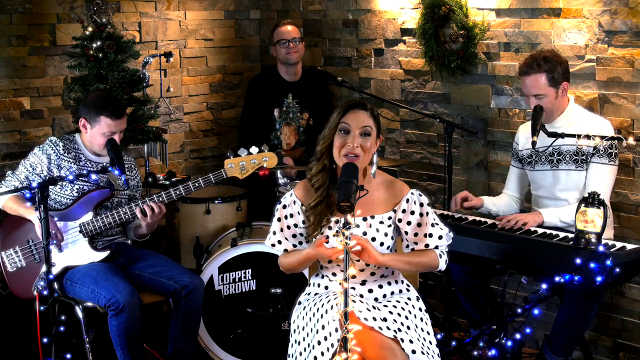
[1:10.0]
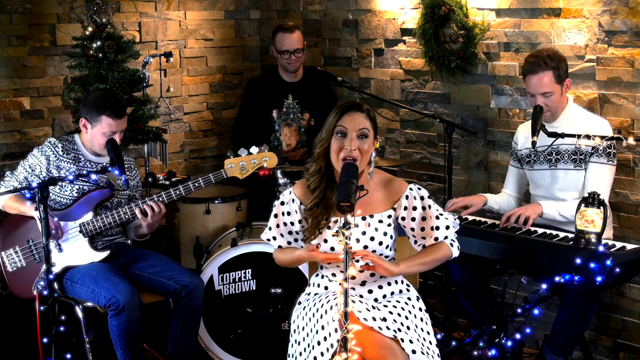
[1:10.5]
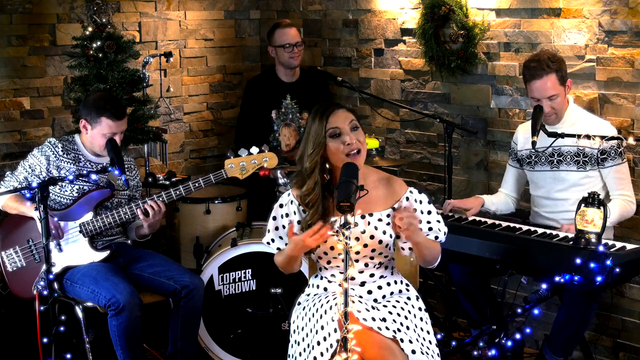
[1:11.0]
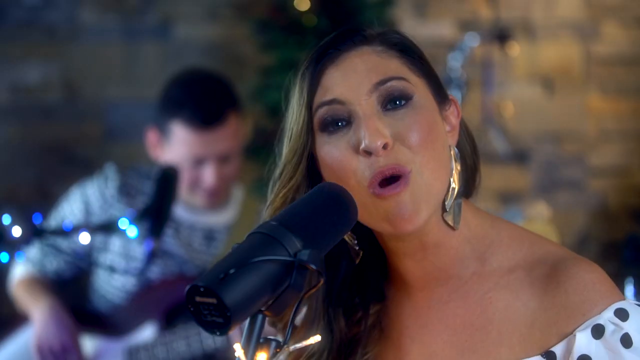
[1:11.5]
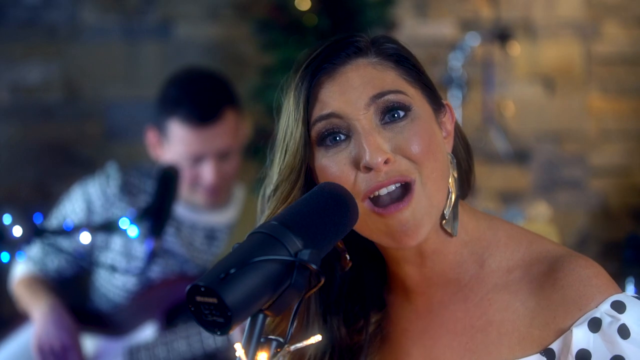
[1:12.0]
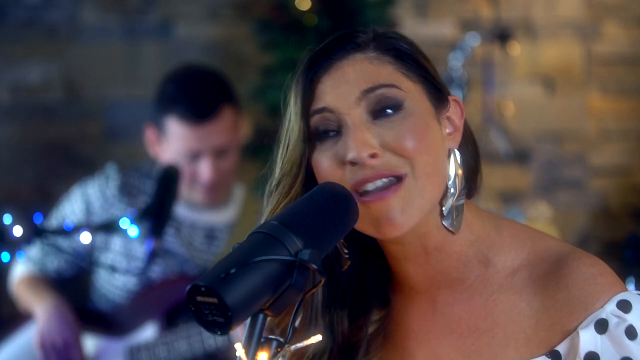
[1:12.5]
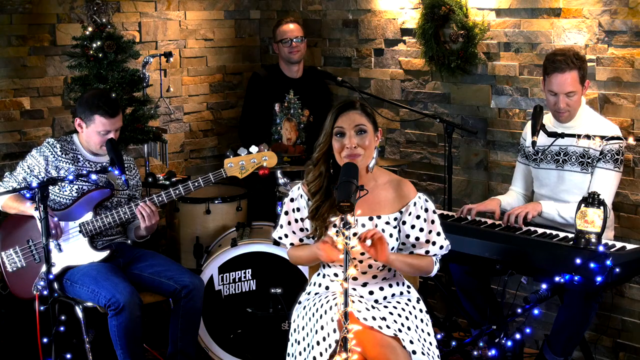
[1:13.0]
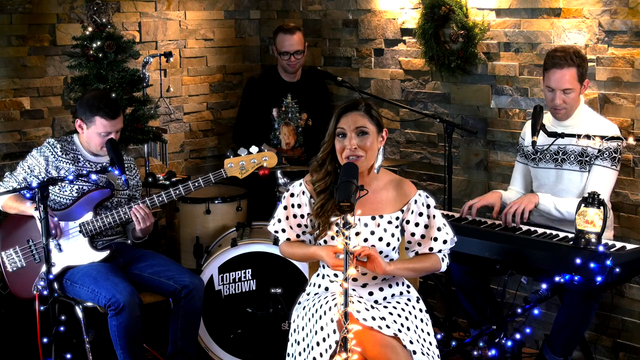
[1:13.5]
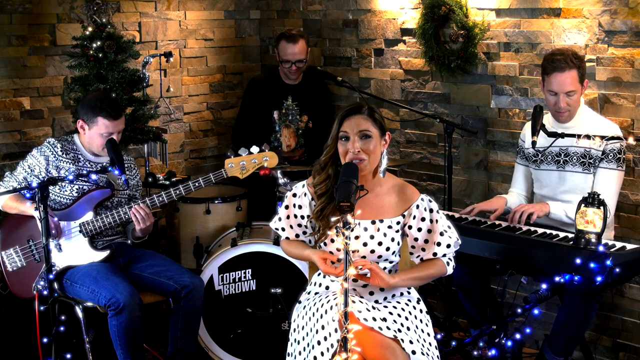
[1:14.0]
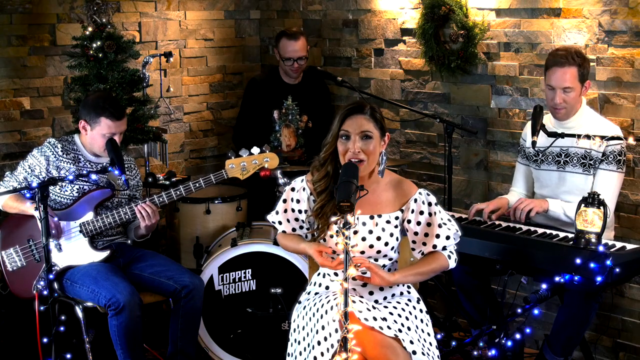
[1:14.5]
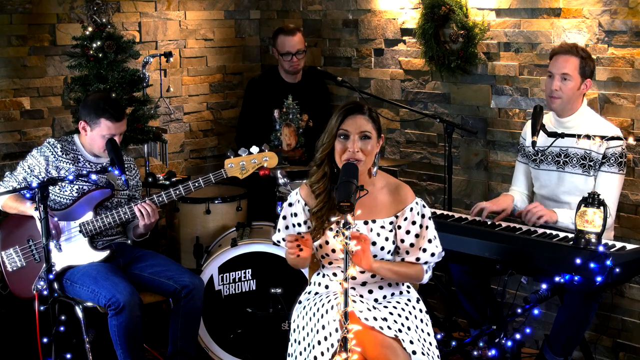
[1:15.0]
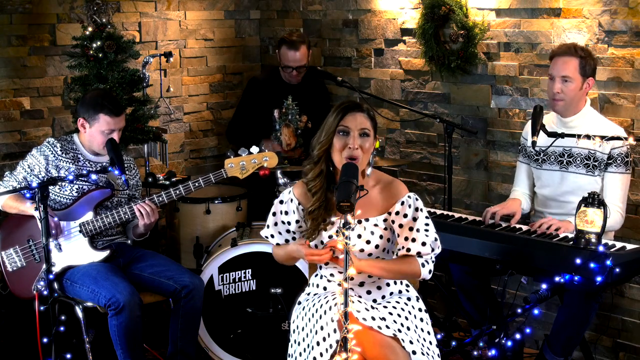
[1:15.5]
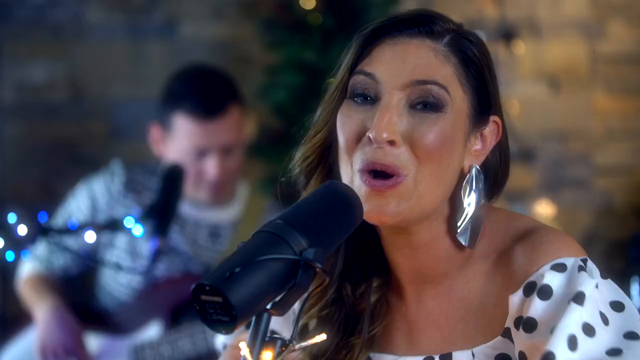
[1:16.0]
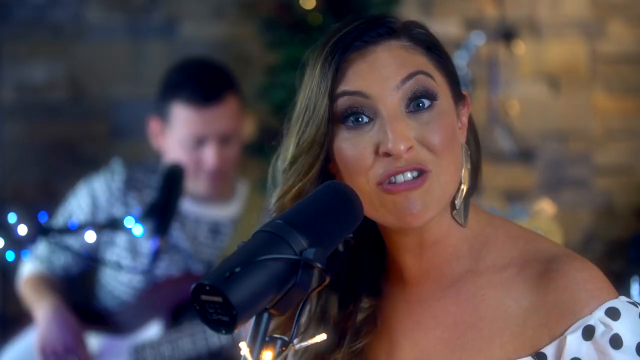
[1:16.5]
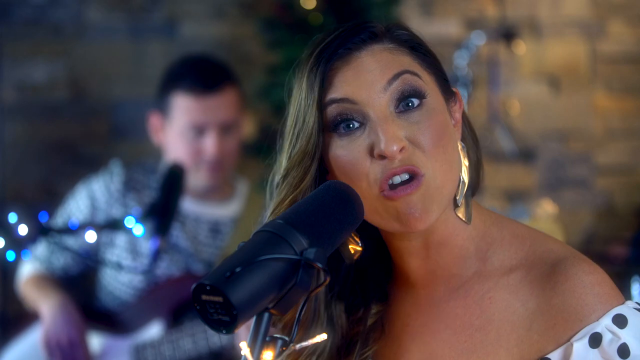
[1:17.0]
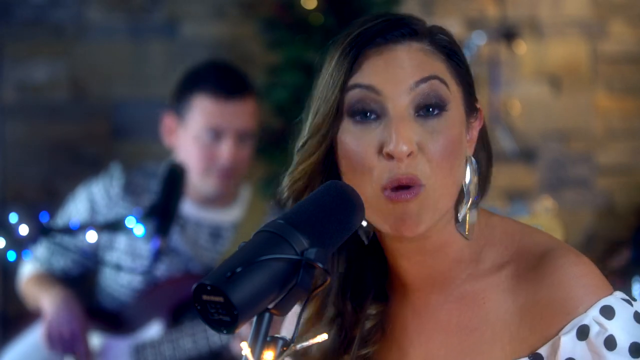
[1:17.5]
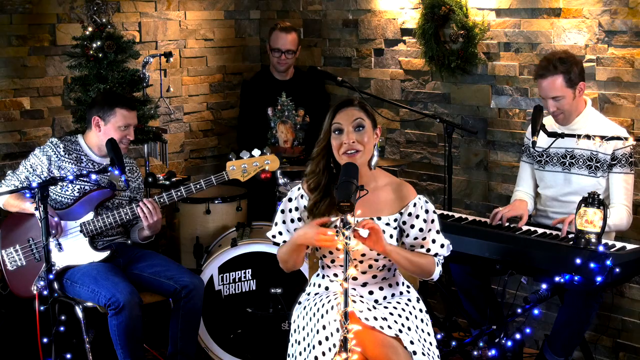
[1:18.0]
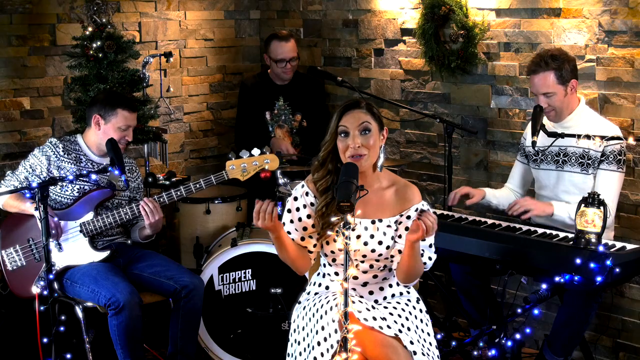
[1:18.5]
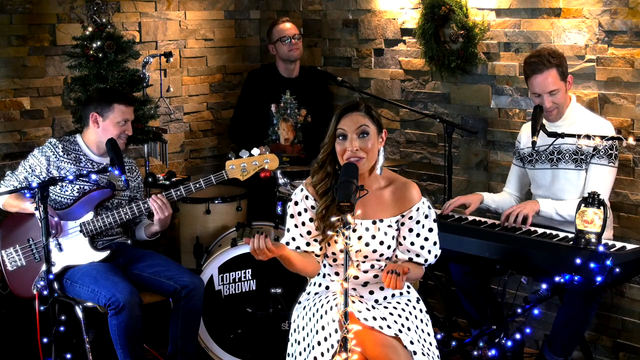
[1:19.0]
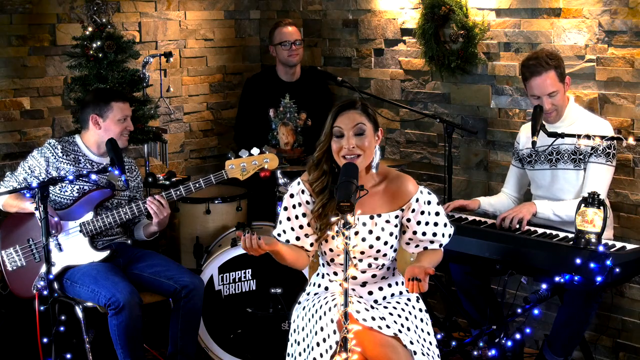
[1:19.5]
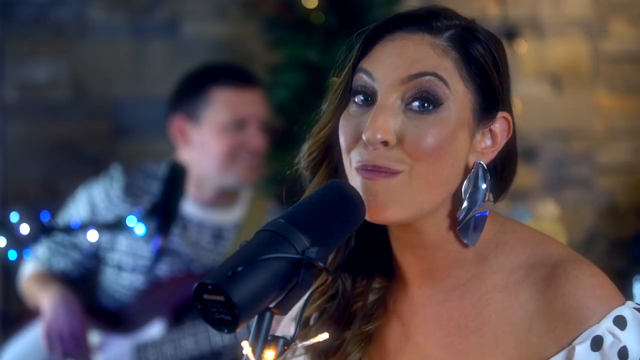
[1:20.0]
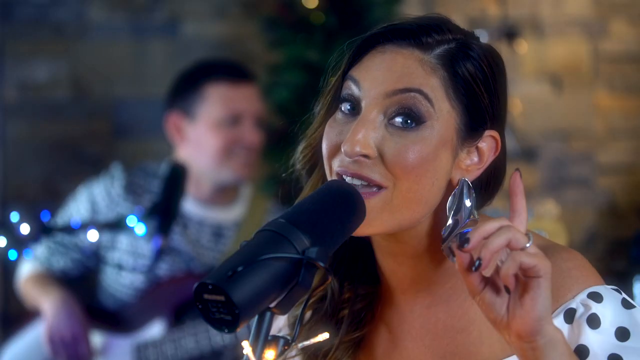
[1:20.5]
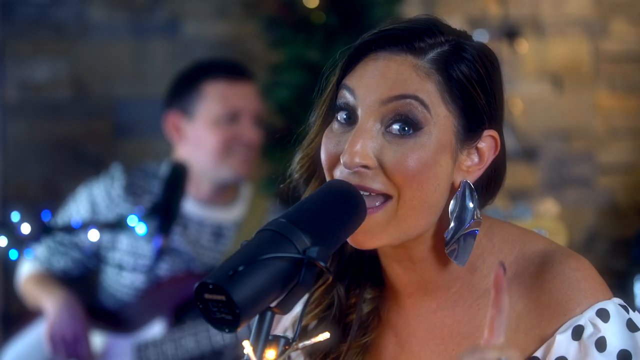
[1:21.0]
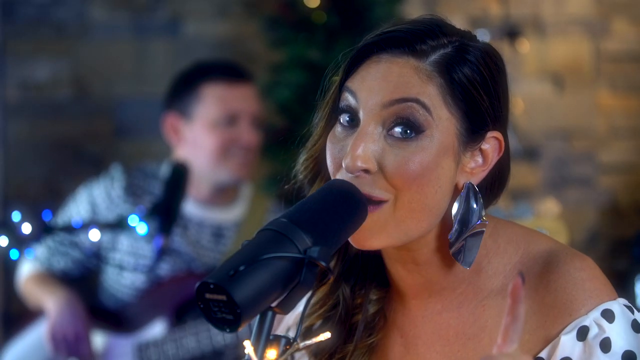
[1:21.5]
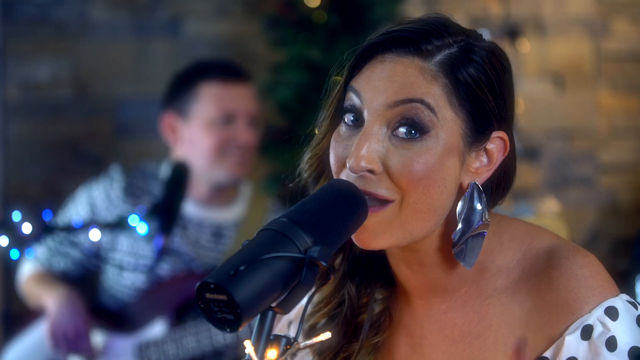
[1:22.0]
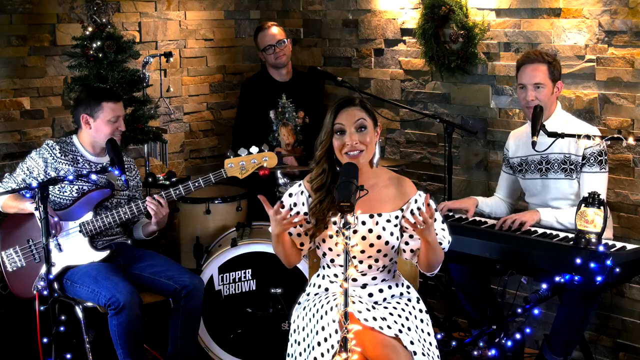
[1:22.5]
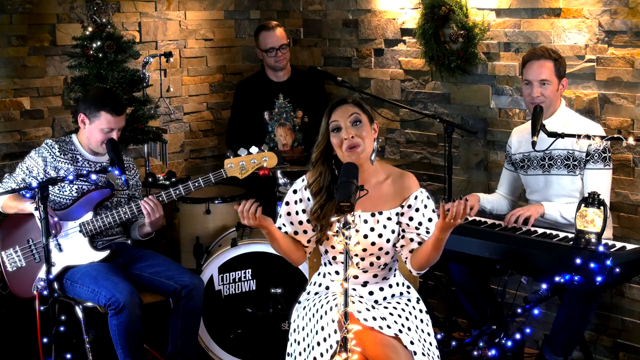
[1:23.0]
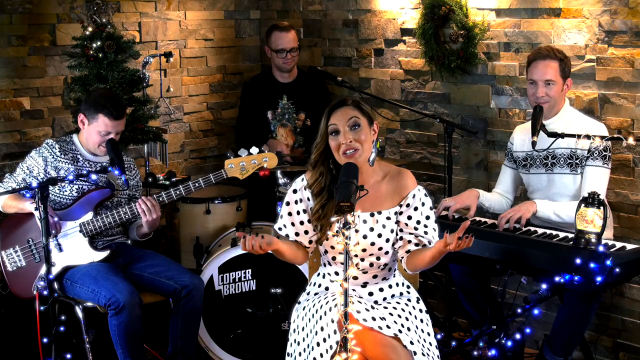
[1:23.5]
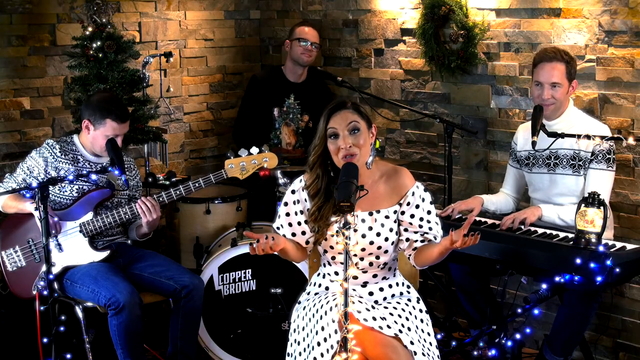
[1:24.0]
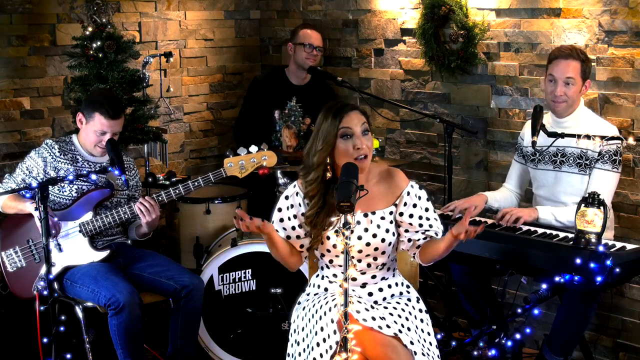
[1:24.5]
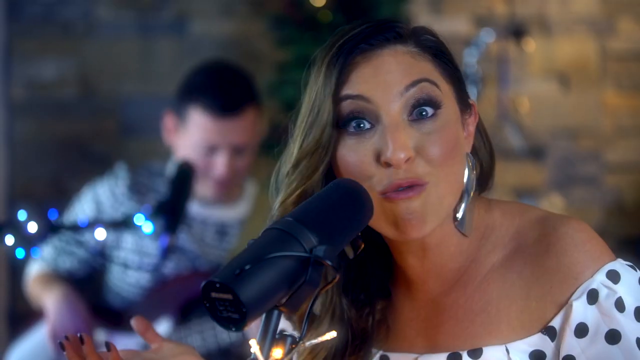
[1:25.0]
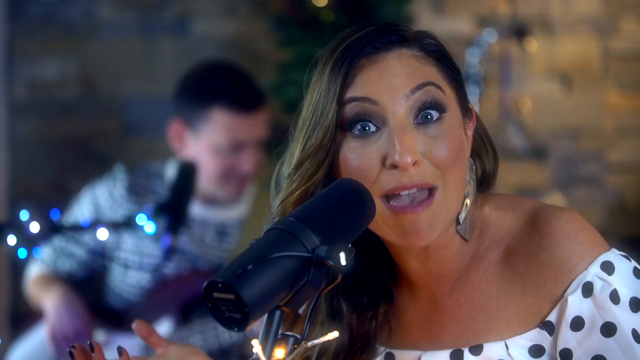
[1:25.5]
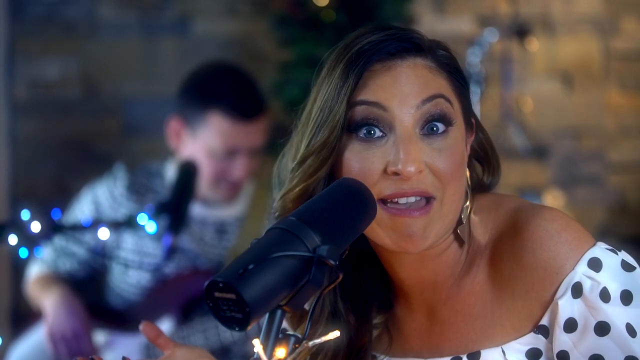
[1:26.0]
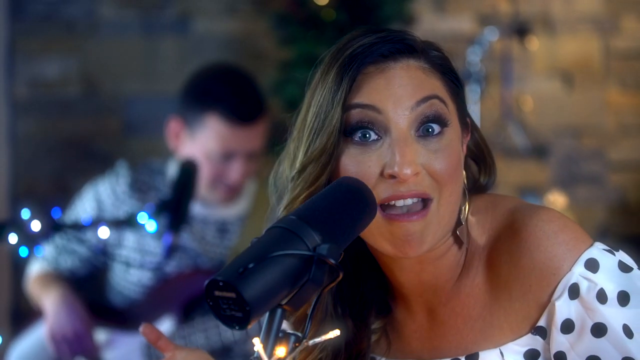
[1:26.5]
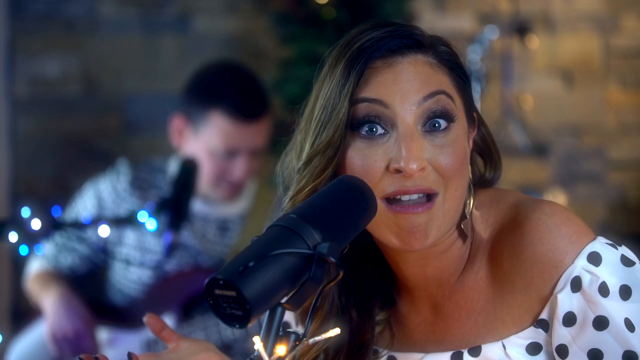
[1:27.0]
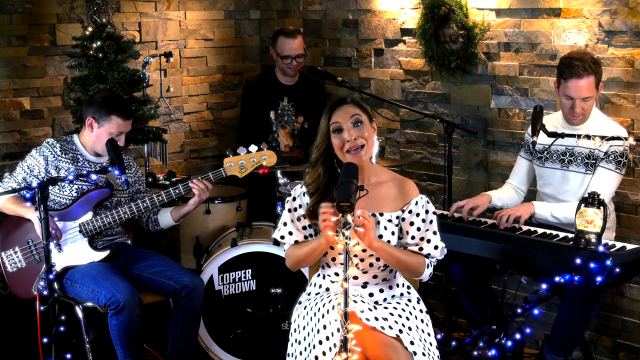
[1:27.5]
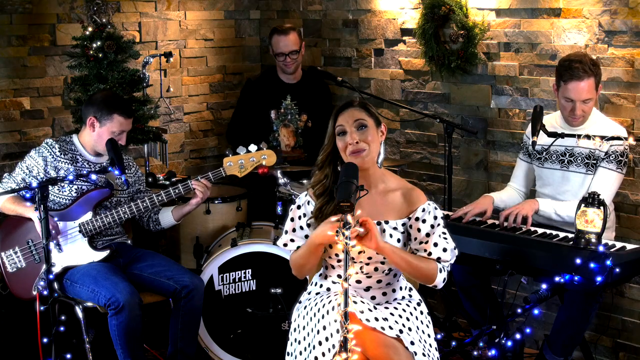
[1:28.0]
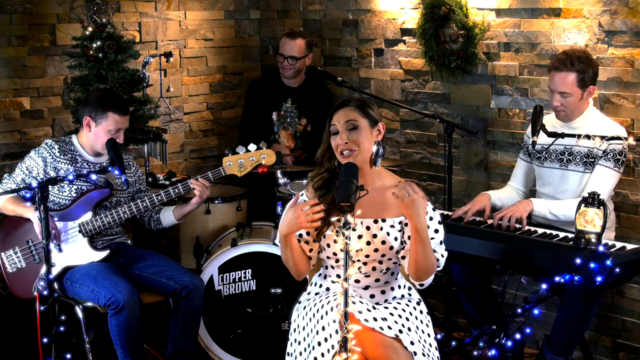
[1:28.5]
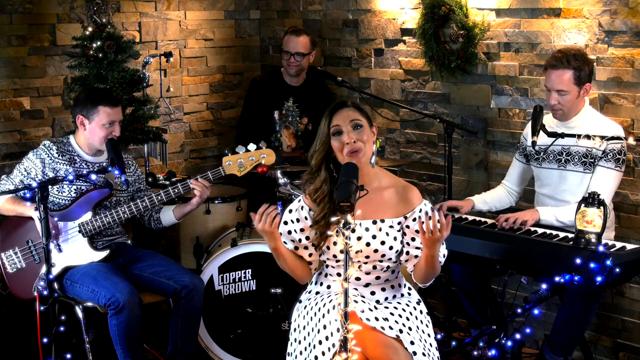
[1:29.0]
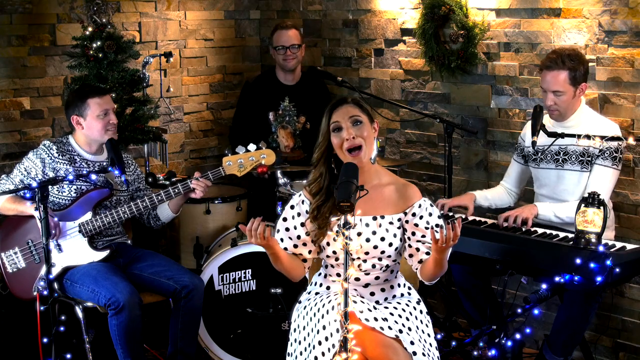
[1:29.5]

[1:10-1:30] Four musicians, three men and one woman, are in a well-lit room. The woman is seated in front of a microphone on a microphone stand. The man over her right shoulder is seated and playing a guitar, the man directly behind her is seated at a drum kit, and the man over her left shoulder is seated at a keyboard. The band is playing and she is singing. She turns her head while she sings, and the camera cuts to a different angle. She uses her hands a lot, putting them up, putting them together, and then putting them out while singing longer notes. Her dangly earrings reflect a lot of light as she sings. The whole time she sings, the men play their instruments and seem pretty happy, kind of smiling with a kind of joyous vibe.